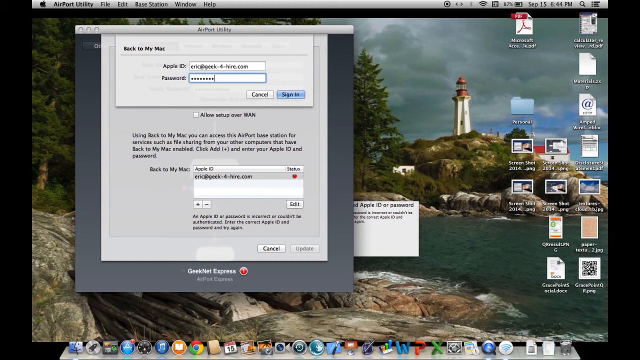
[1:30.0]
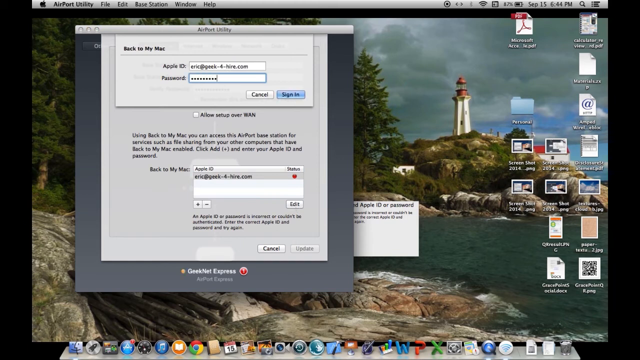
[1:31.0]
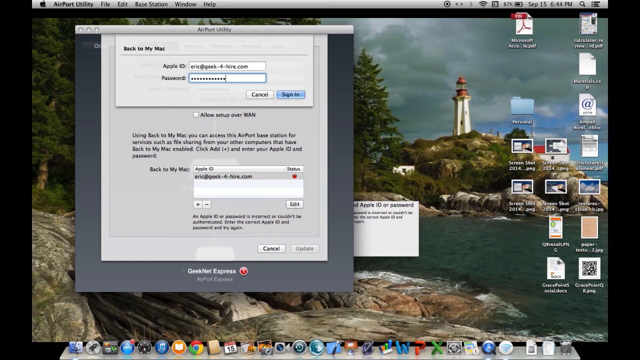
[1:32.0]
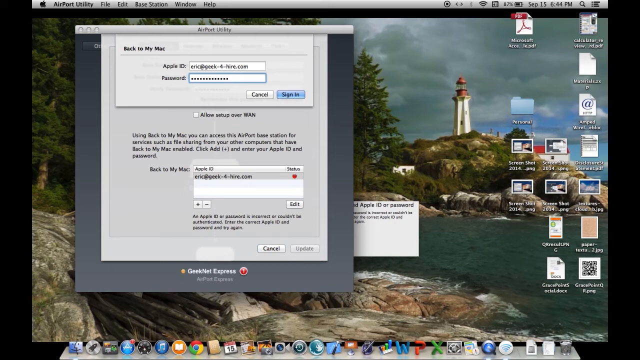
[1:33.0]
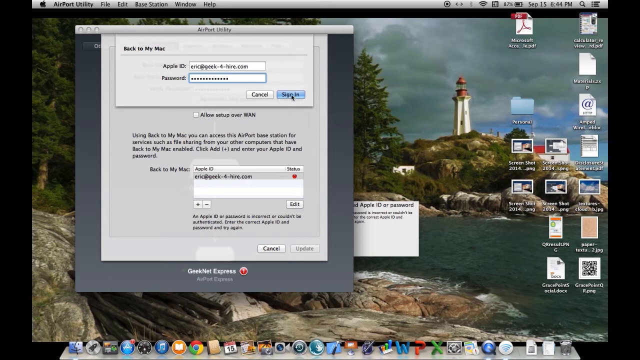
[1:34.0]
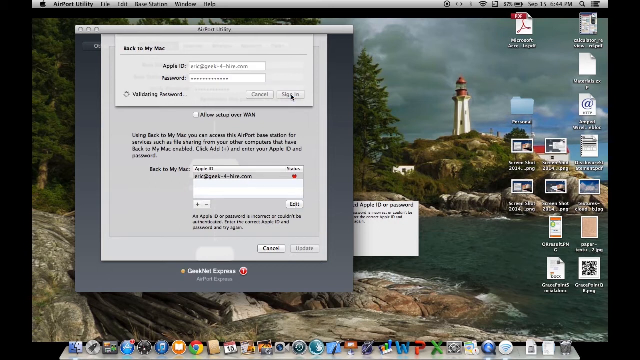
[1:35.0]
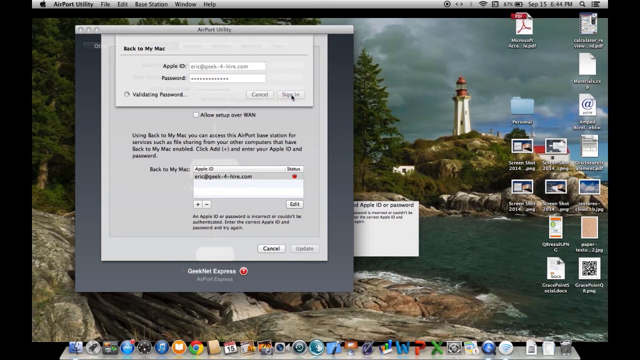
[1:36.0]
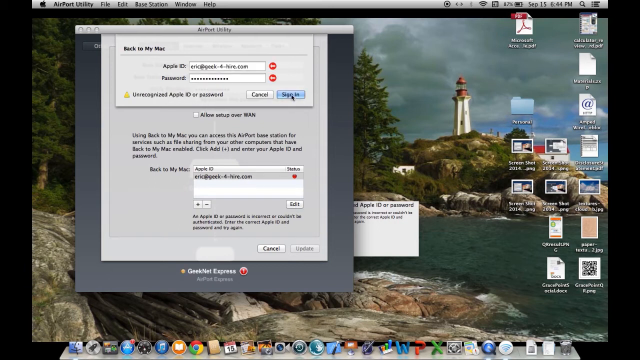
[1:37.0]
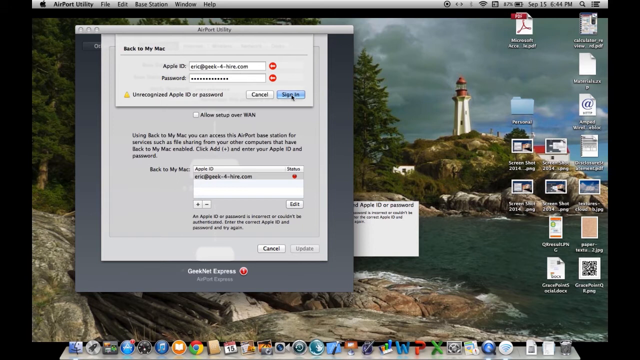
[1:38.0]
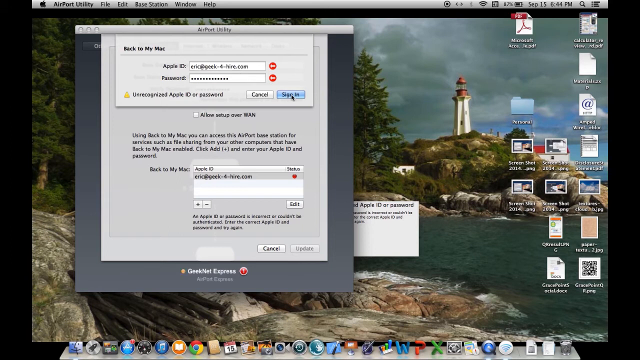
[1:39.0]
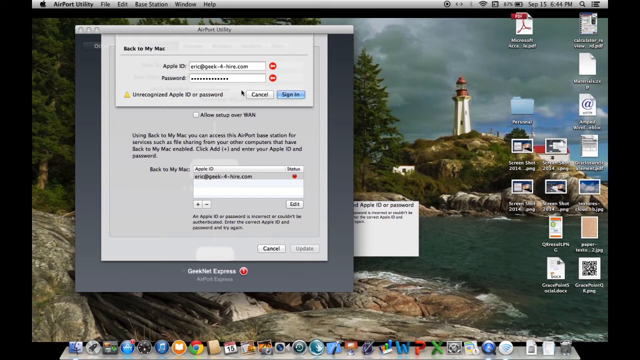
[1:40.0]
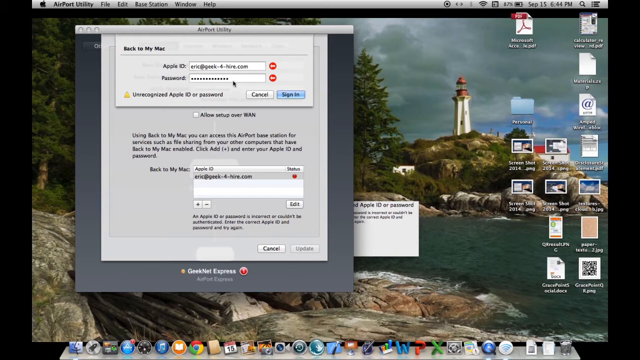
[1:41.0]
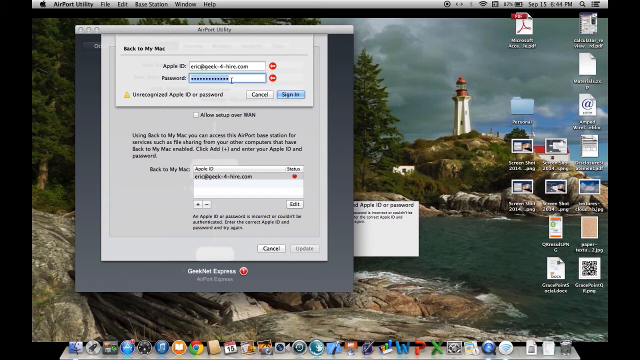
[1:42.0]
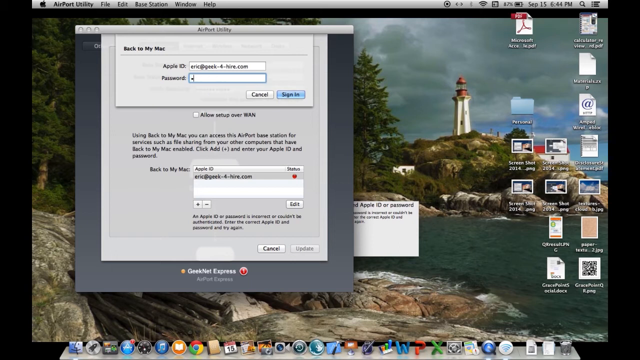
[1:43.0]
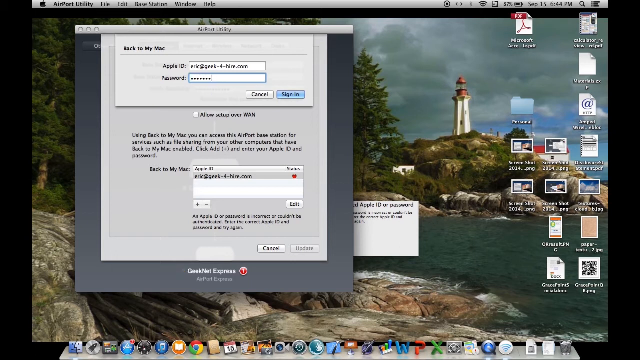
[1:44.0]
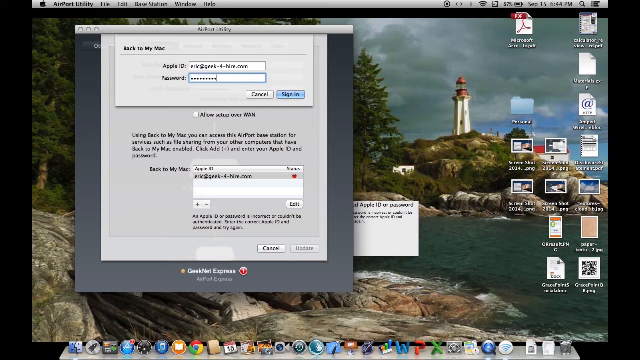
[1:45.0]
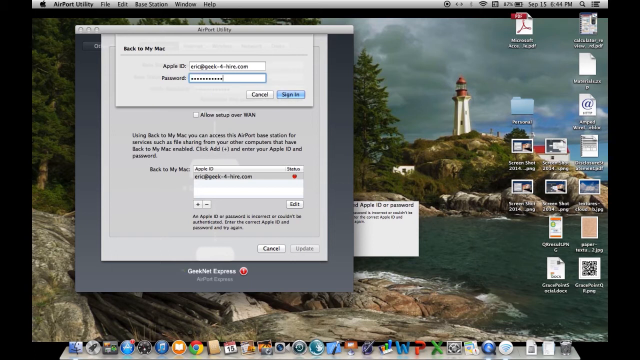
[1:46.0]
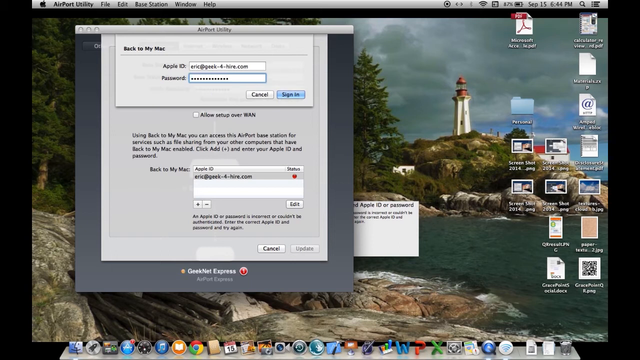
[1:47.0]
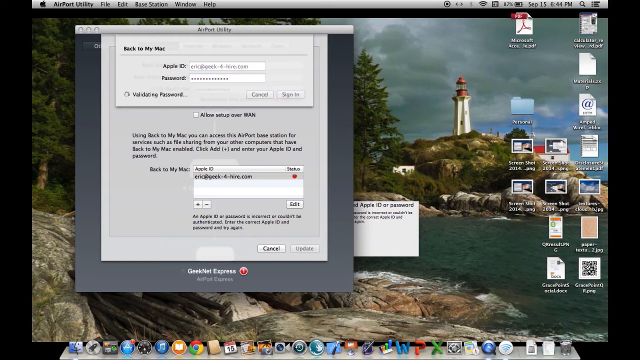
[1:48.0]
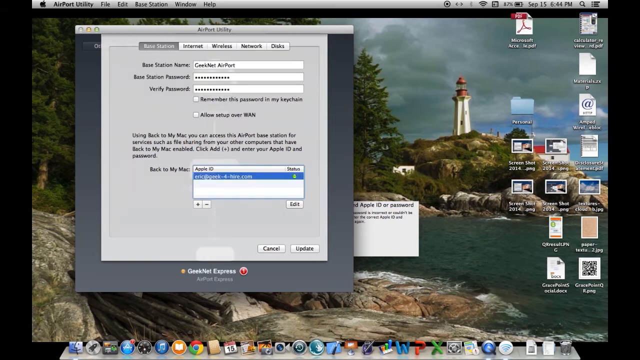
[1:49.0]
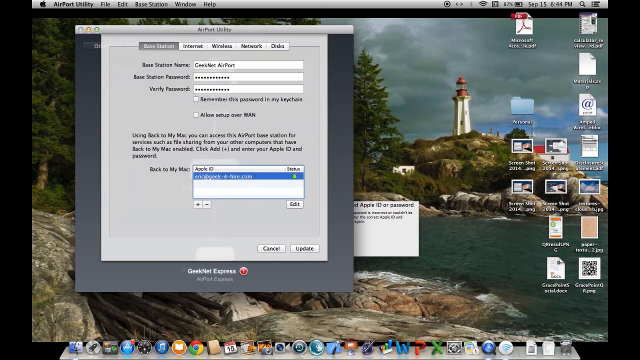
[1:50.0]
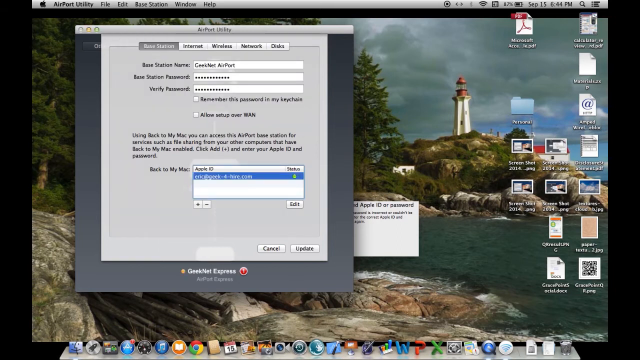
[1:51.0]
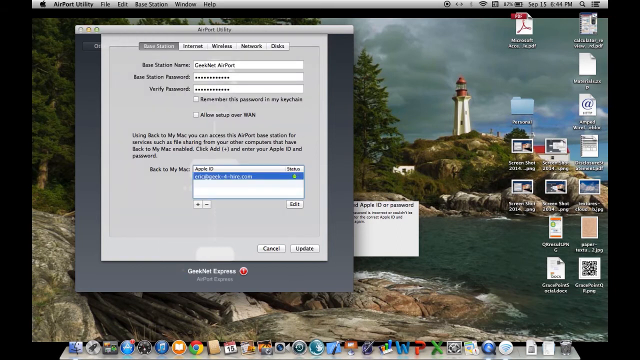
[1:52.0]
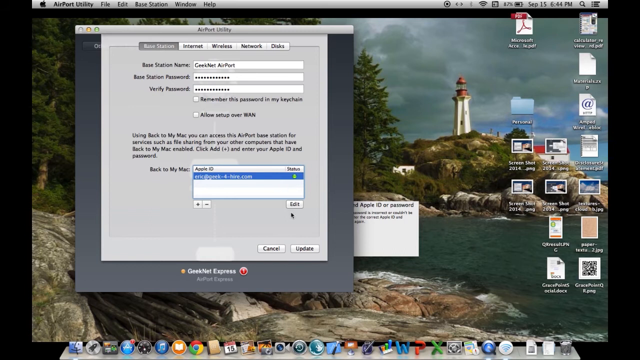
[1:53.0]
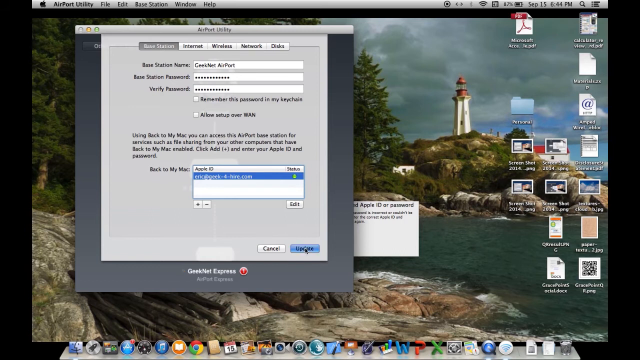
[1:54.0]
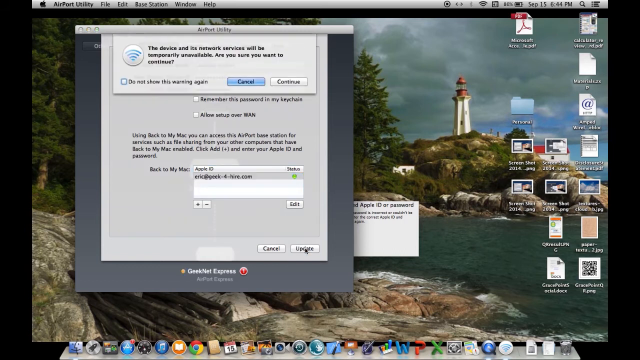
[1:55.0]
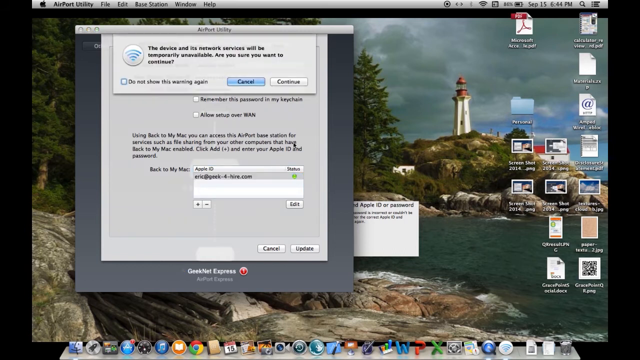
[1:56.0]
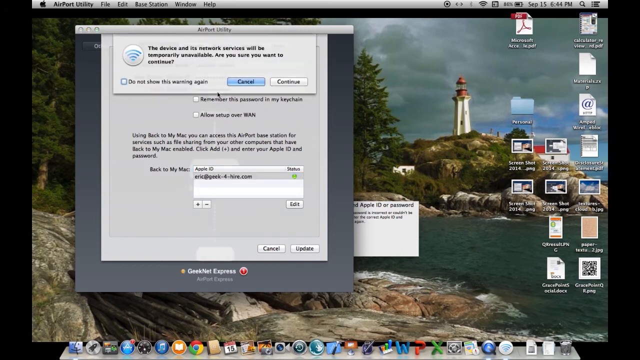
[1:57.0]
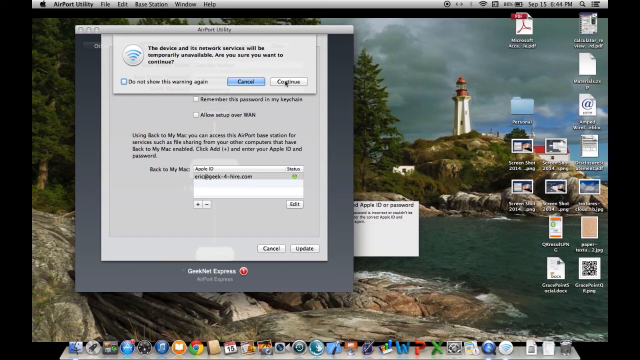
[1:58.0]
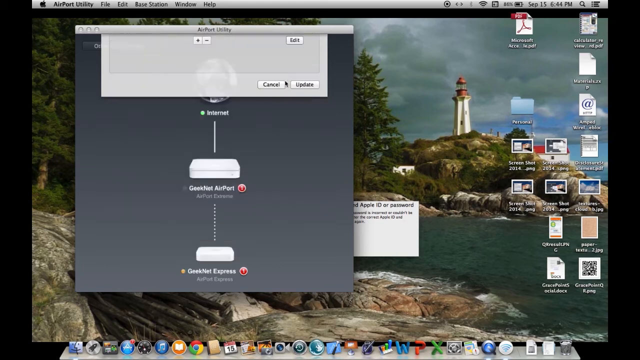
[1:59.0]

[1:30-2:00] The user is still trying to sign in. The screen shows "validating password" for the Apple ID, followed by "Unrecognized Apple ID or password." They seem stuck and keep trying their password. Then text reads "Base station password" and "this device and its network services will be temporarily unavailable." The desktop background shows water and a tower, a watchtower.